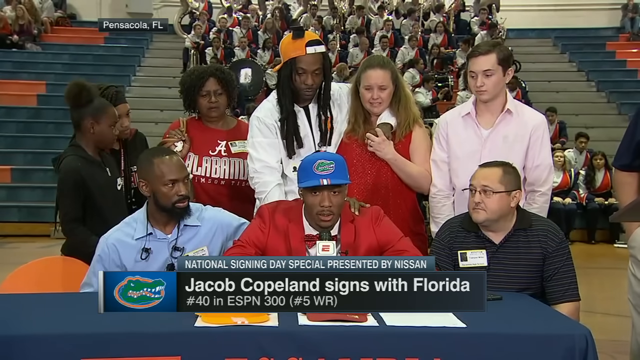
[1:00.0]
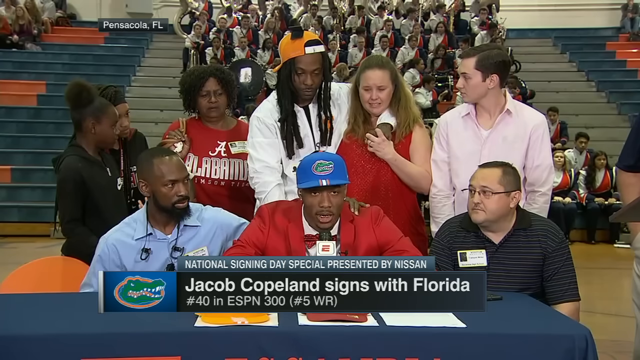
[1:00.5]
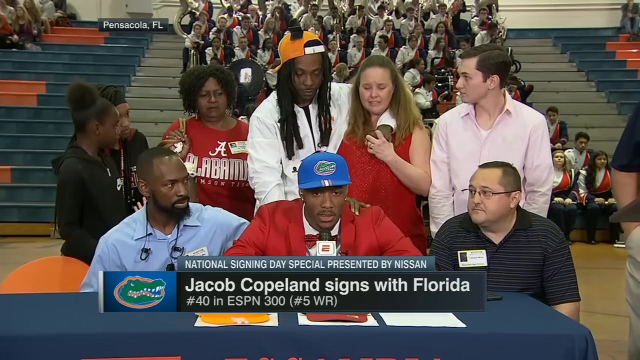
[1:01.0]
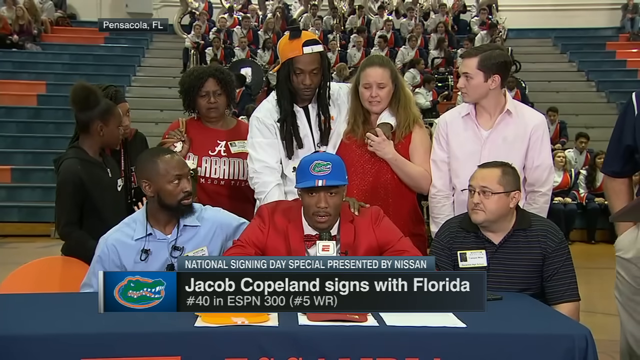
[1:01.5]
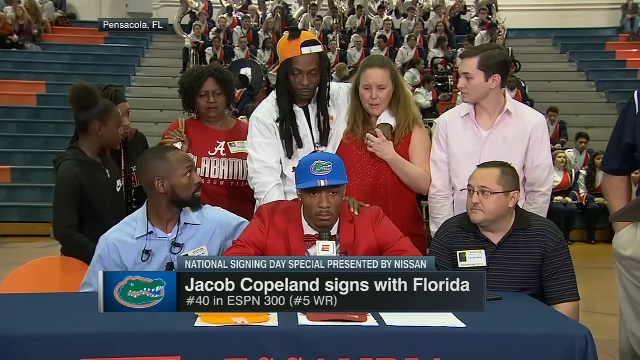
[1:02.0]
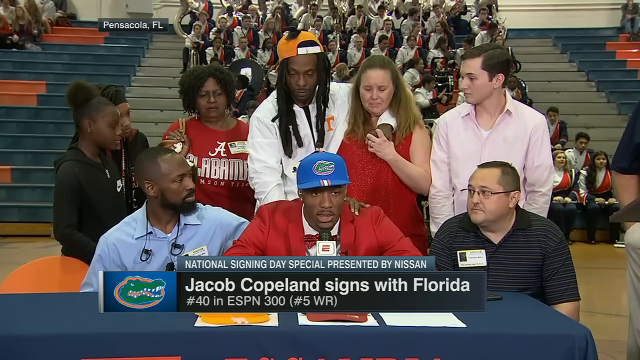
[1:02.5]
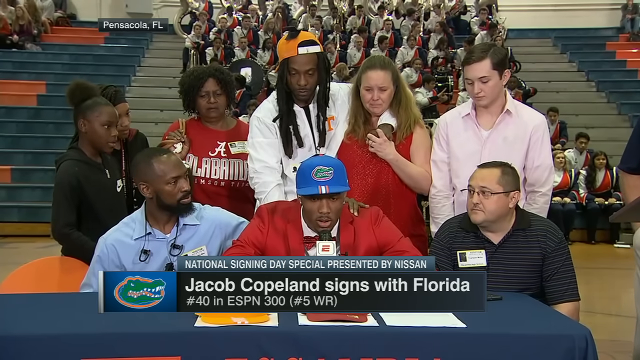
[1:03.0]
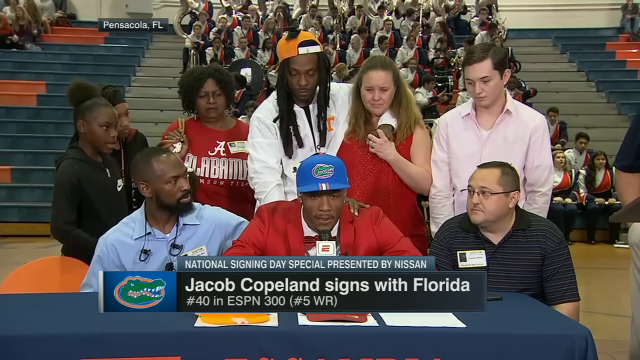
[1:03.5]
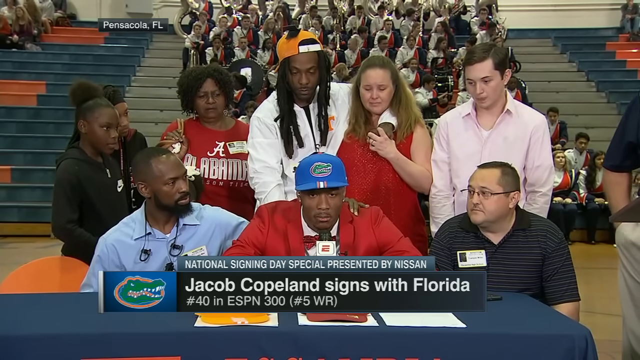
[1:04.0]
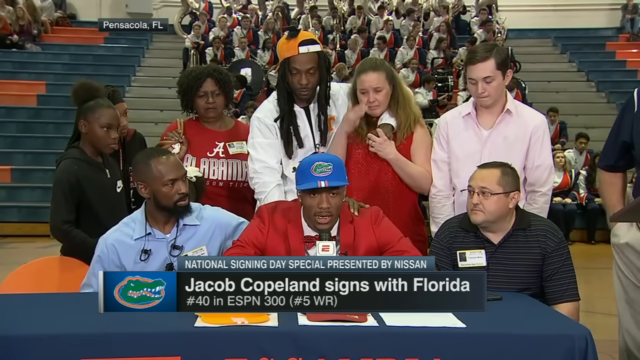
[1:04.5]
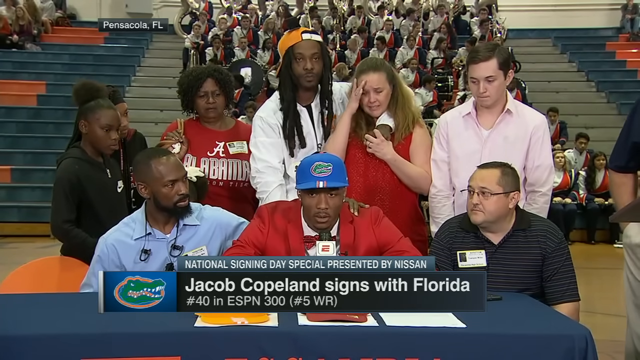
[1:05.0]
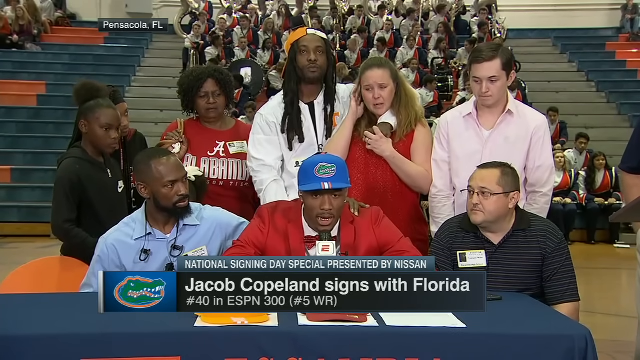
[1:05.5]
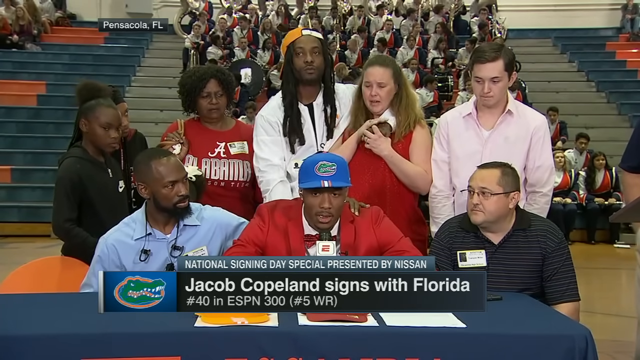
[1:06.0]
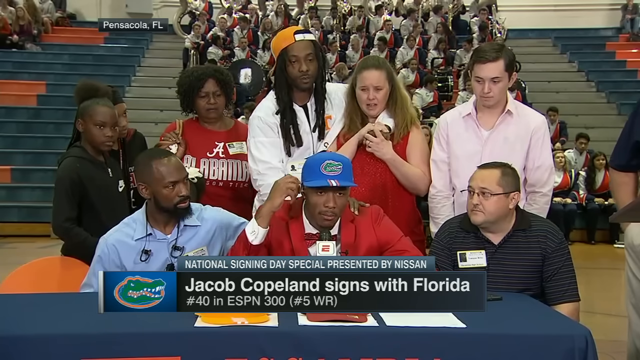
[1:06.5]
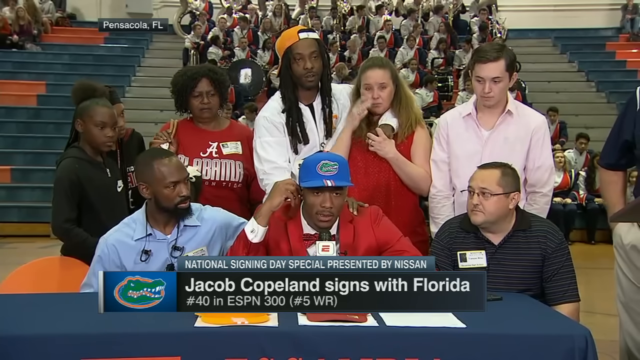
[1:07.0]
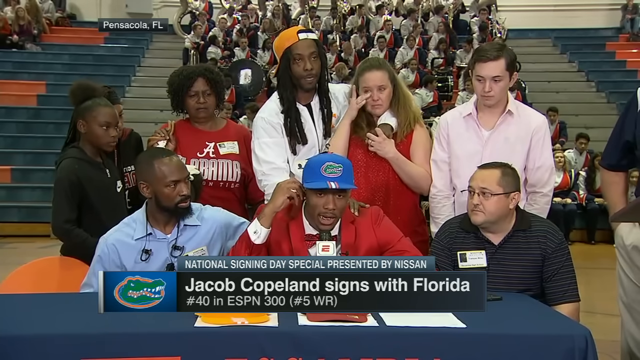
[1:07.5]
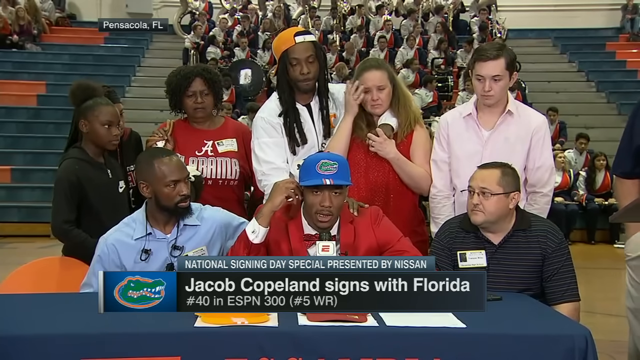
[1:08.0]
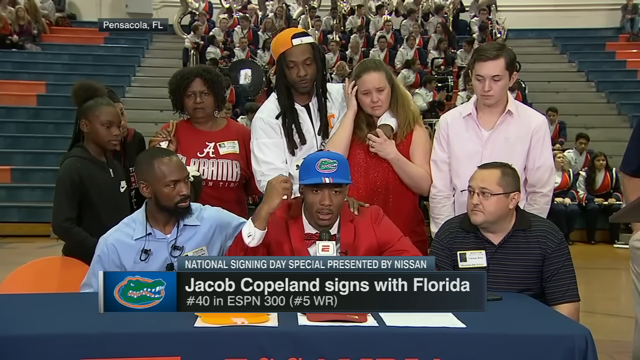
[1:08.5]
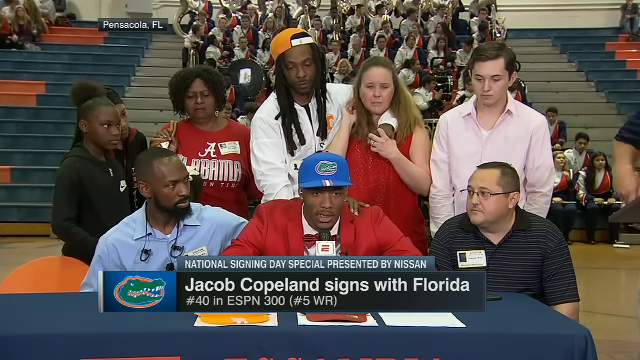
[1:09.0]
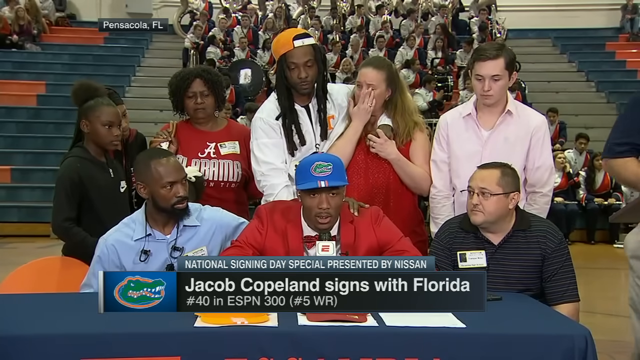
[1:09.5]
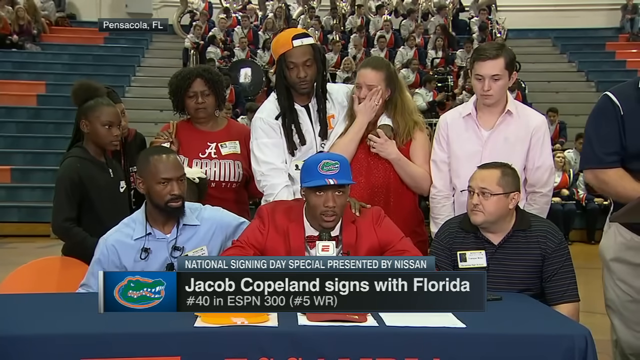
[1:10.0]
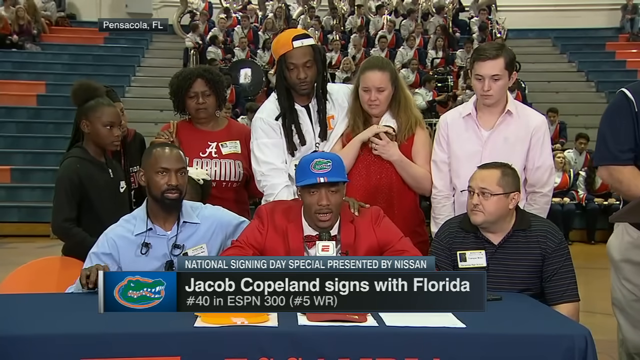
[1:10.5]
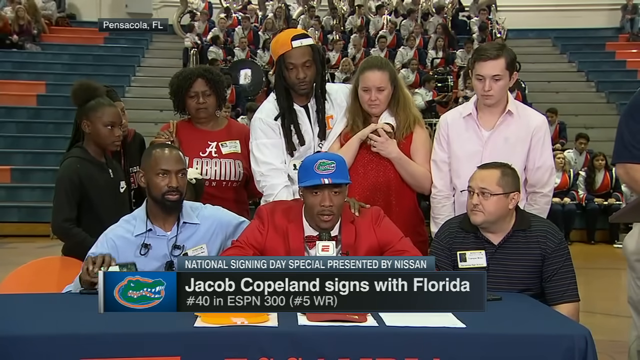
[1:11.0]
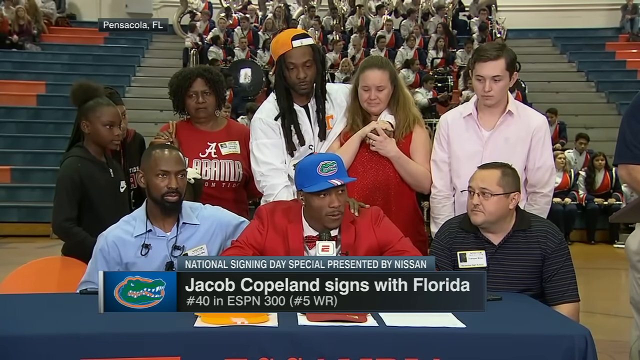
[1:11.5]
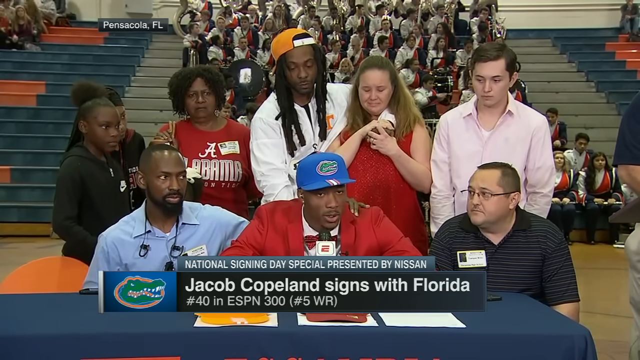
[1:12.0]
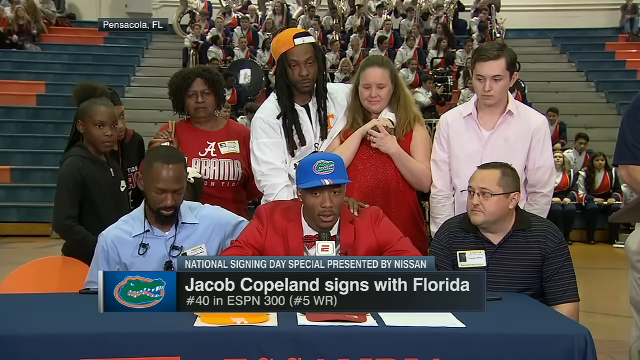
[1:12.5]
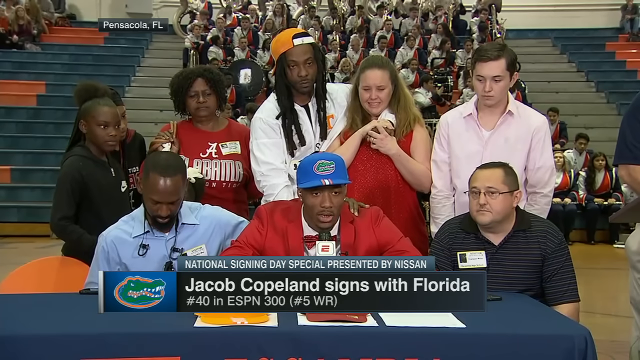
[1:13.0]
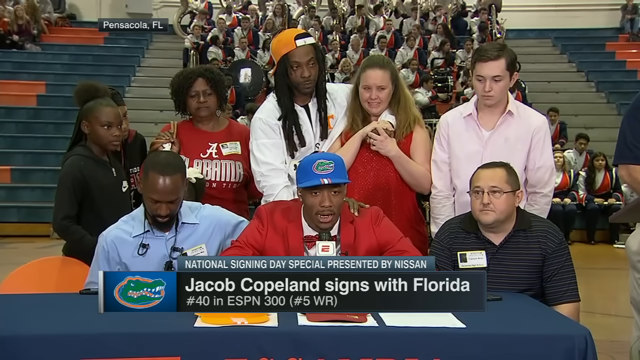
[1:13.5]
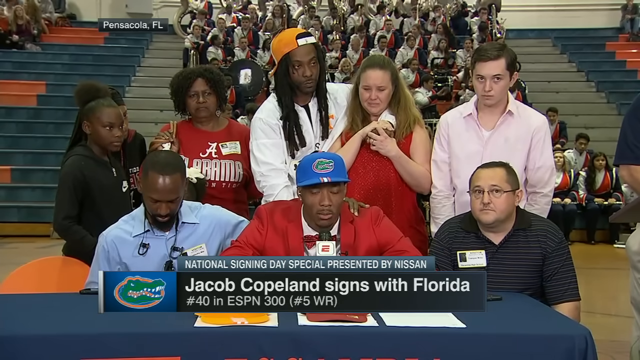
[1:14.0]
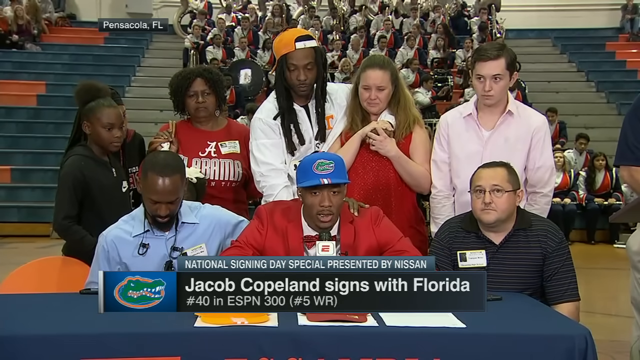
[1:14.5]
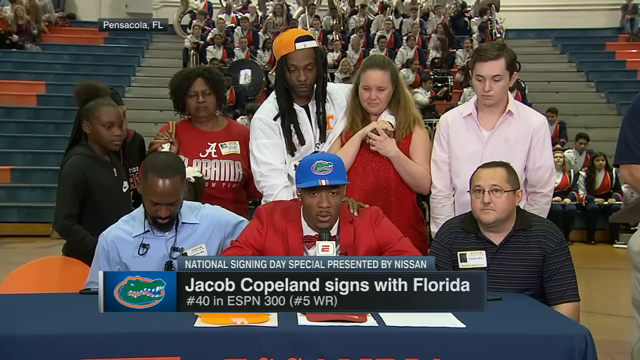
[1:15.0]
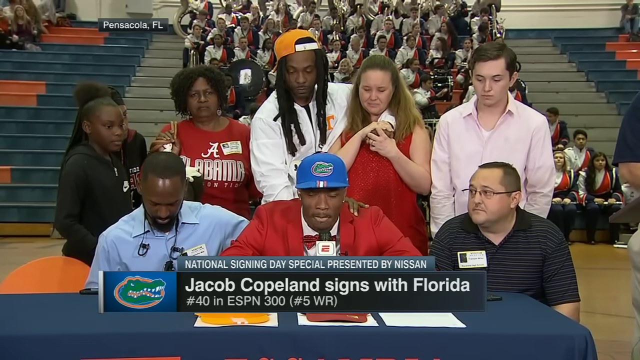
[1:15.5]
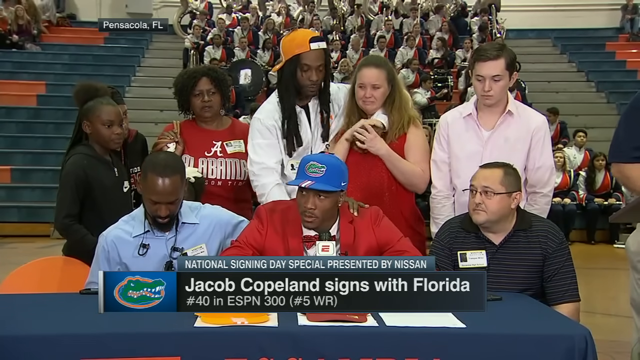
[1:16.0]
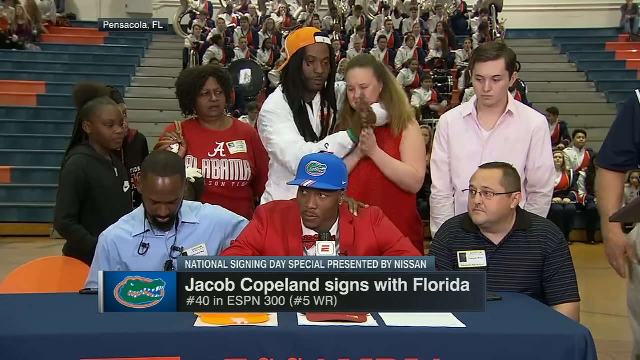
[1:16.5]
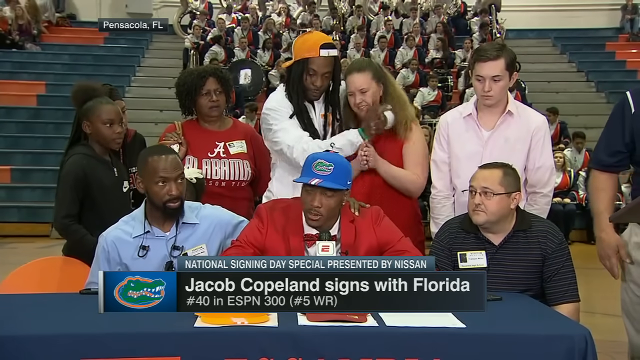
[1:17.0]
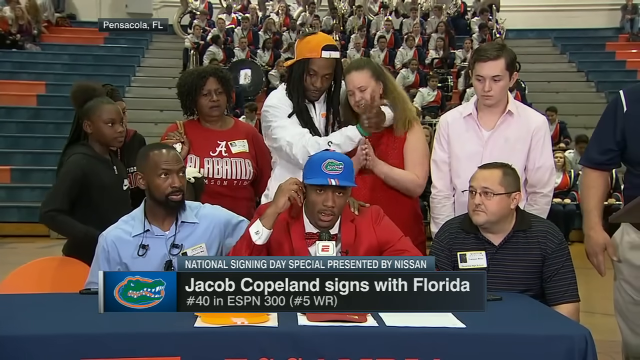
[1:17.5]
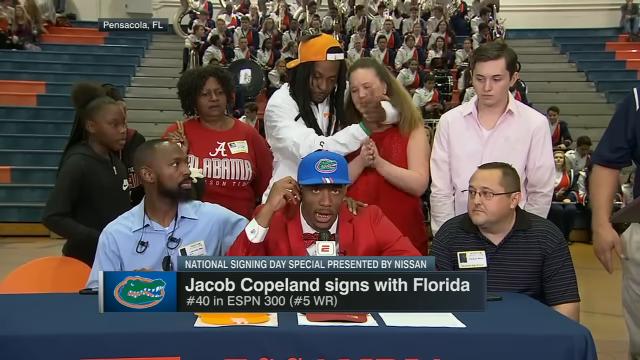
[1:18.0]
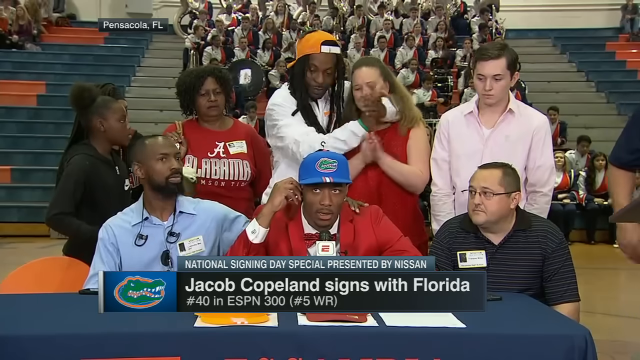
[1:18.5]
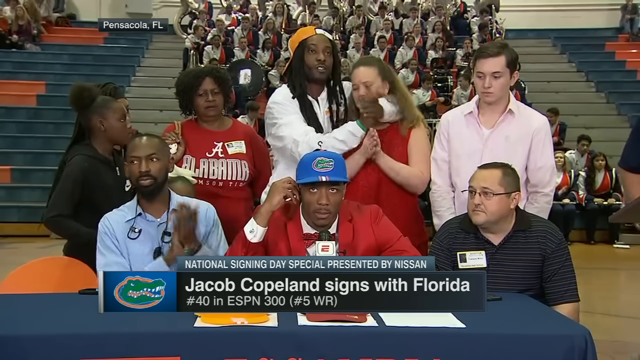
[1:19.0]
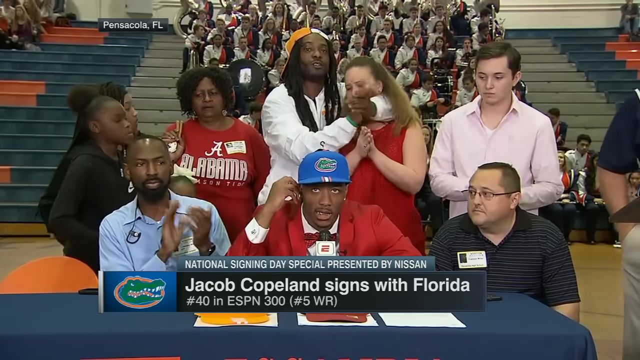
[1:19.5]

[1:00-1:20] Jacob Copeland, the number five wide receiver recruit in the United States, continues to sit behind a desk with the Florida Gators cap on his head. The red Alabama Crimson Tide cap and the orange Tennessee Volunteers cap sit in front of him, indicating he did not choose those schools. He is surrounded by people who seem to care very much about him, possibly family and friends. One woman behind him, over his left shoulder, is visibly moved to tears. A man to his right (the viewer's left), in a blue button-down shirt with wired headphones, listens very intently as Jacob talks into the microphone and puts his arm around him as he continues to talk. The auditorium has many people in it. Toward the back center is a marching band dressed in unison in red, white and black, with various instruments visible in their hands. At the back left, people sit mostly toward the top of the bleachers, and the same is true on the right. A little banner in a black box with white font in the top left-hand corner of the screen shows the event is taking place in Pensacola, Florida.